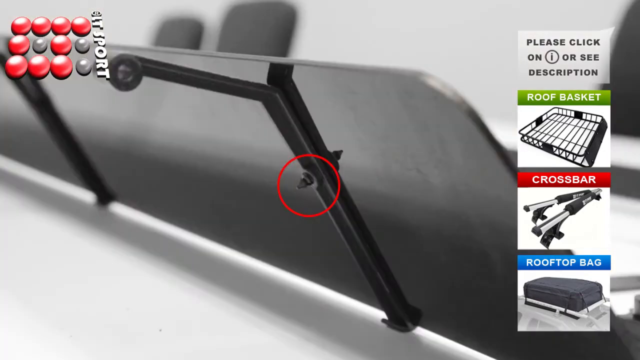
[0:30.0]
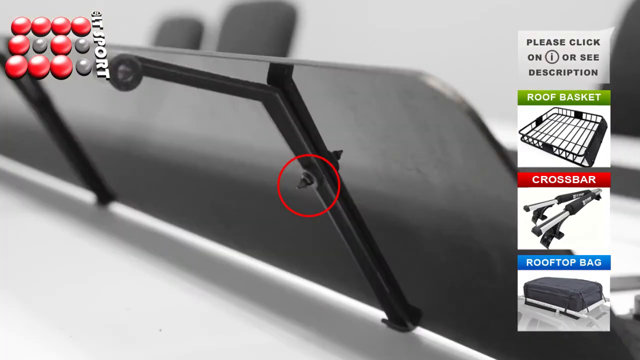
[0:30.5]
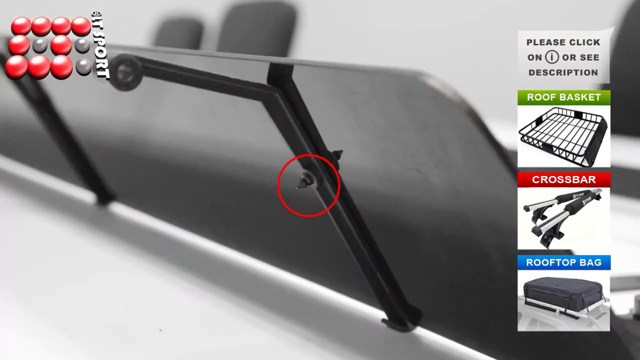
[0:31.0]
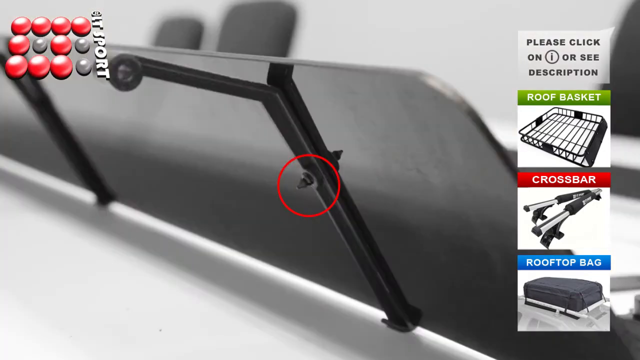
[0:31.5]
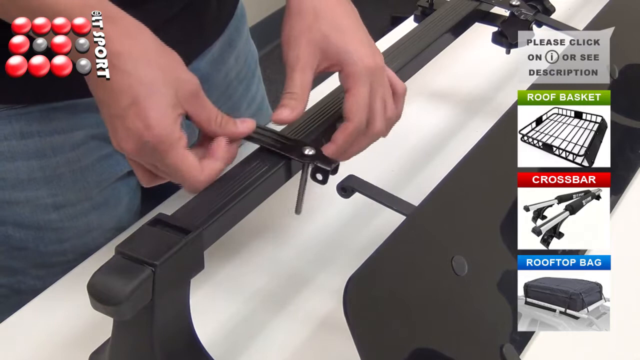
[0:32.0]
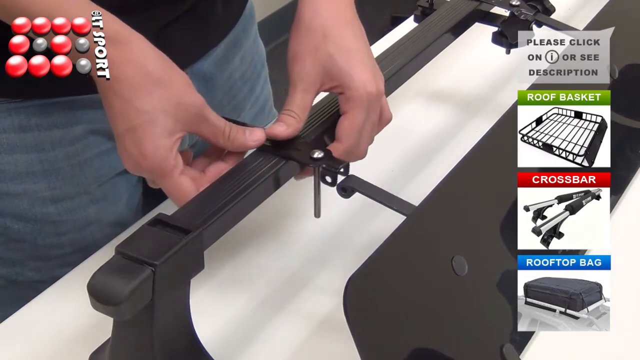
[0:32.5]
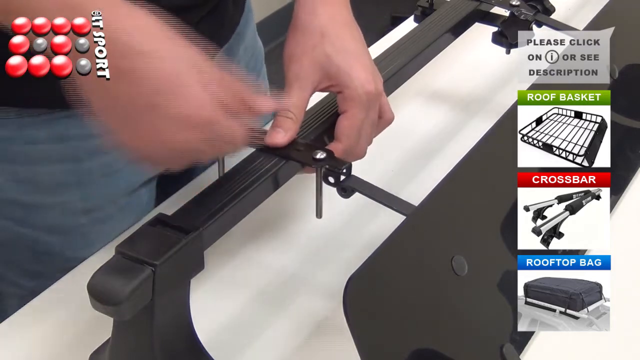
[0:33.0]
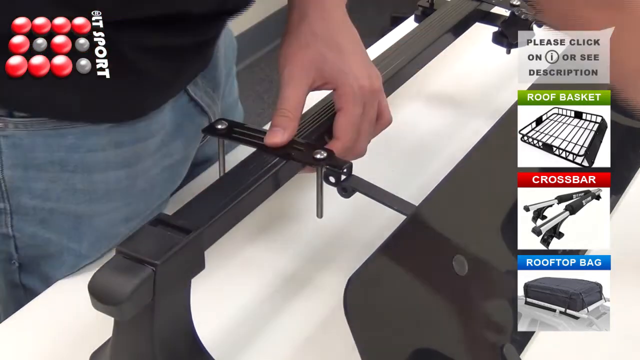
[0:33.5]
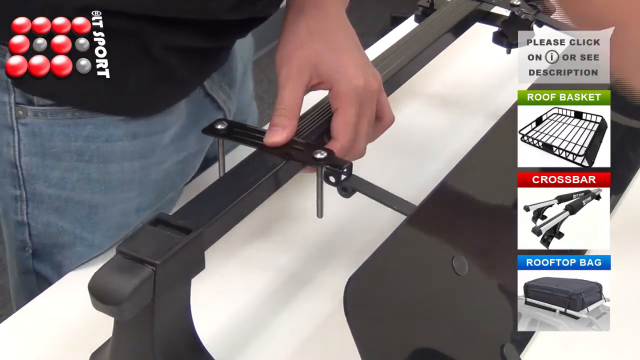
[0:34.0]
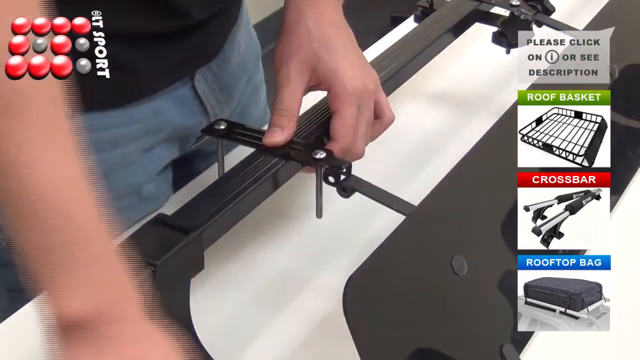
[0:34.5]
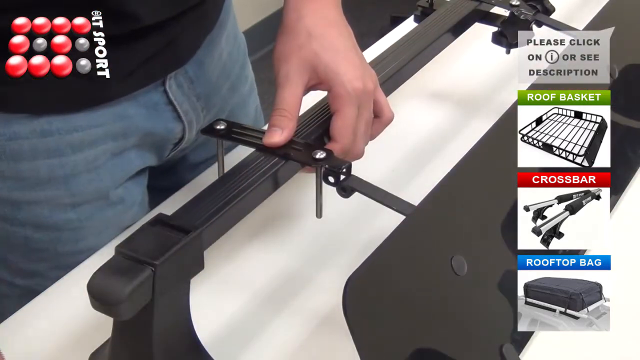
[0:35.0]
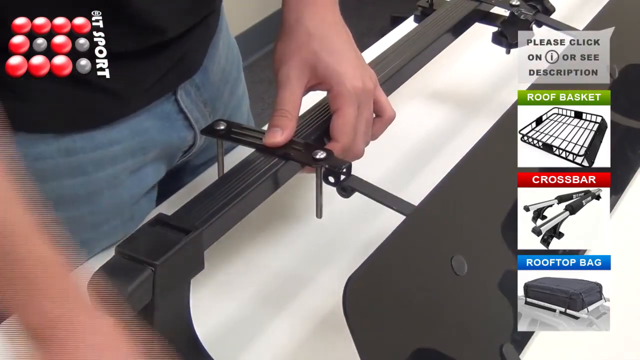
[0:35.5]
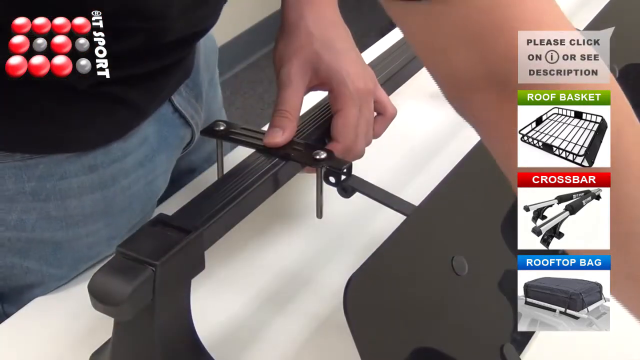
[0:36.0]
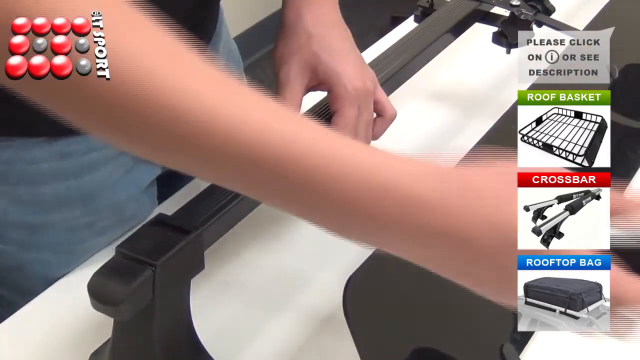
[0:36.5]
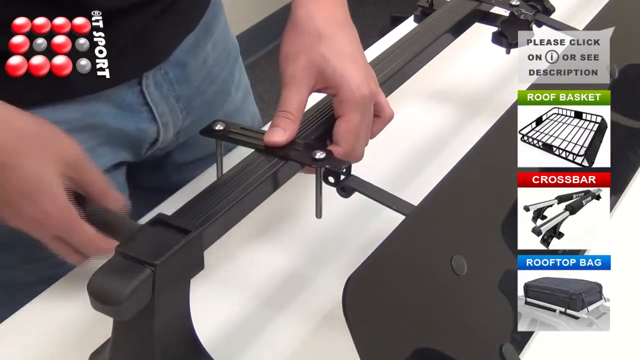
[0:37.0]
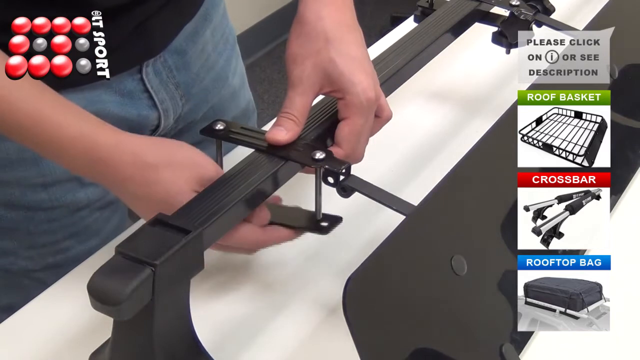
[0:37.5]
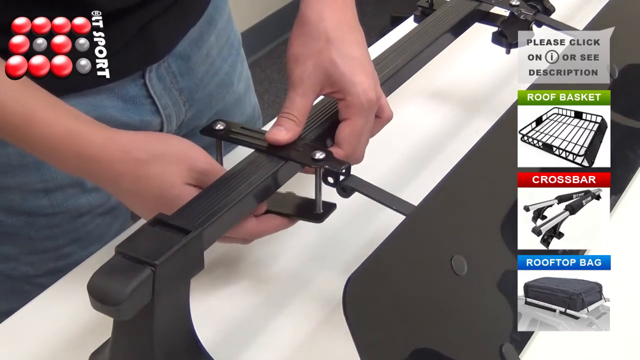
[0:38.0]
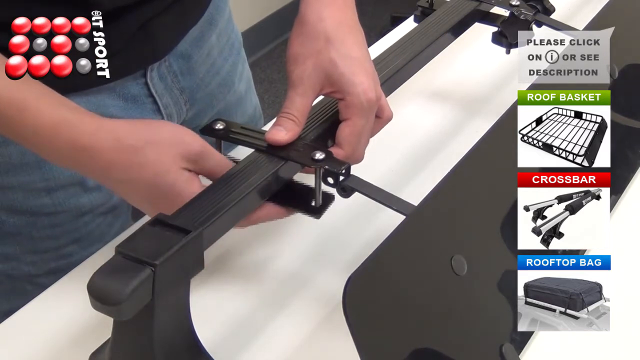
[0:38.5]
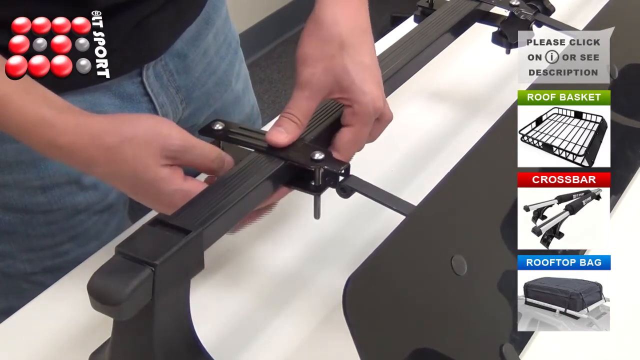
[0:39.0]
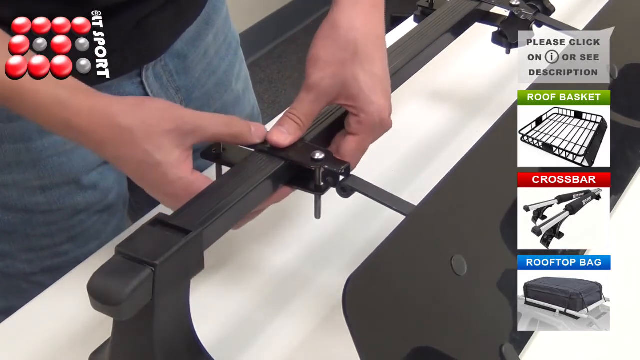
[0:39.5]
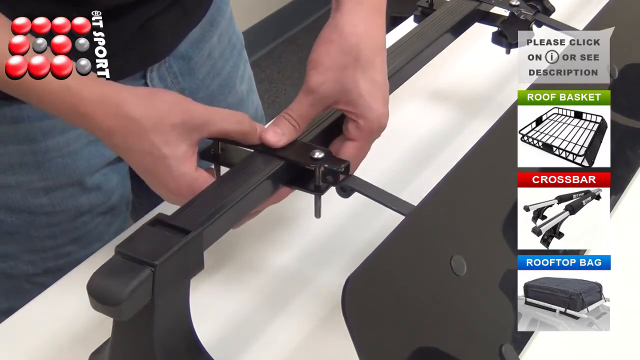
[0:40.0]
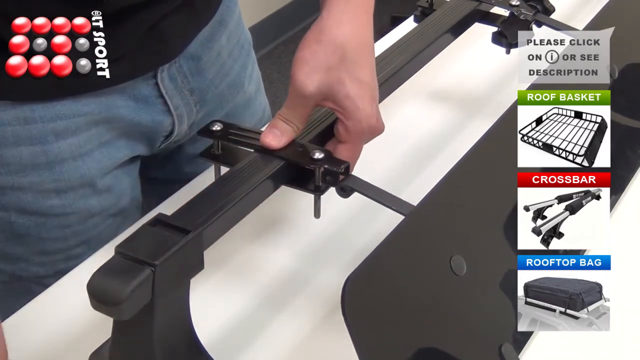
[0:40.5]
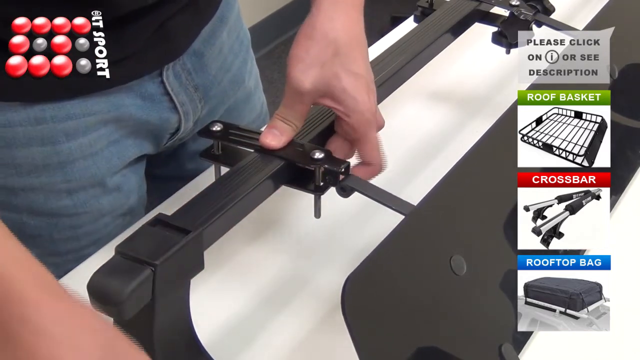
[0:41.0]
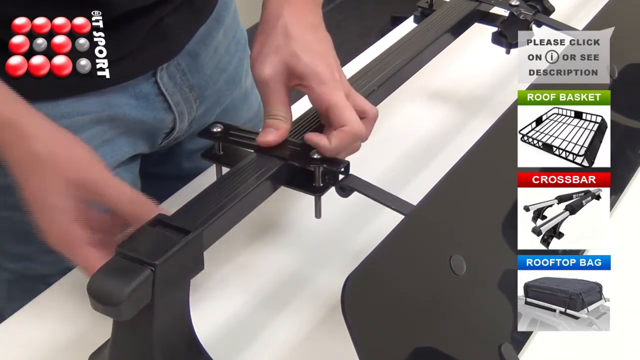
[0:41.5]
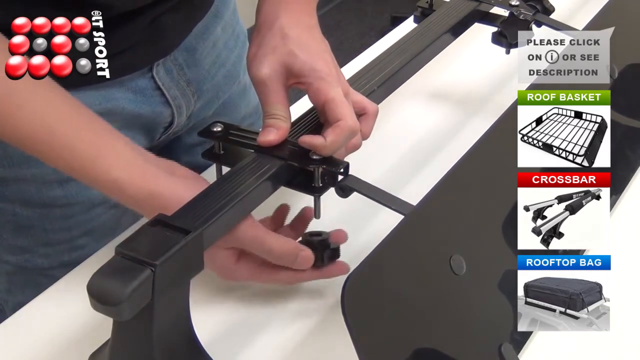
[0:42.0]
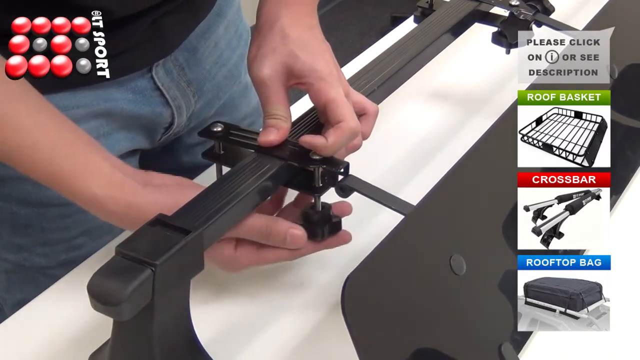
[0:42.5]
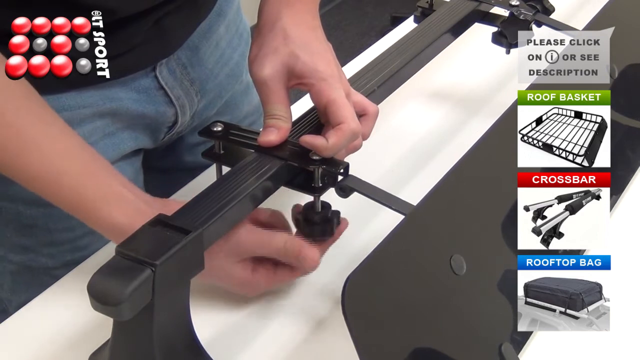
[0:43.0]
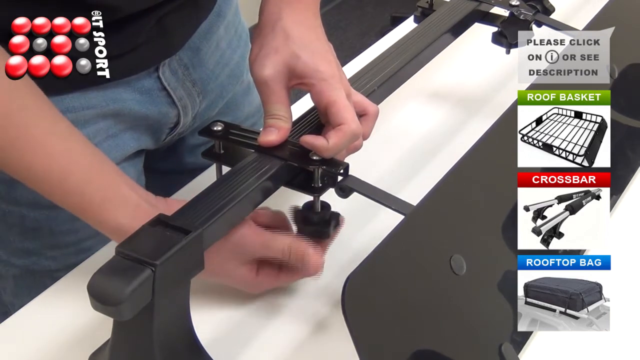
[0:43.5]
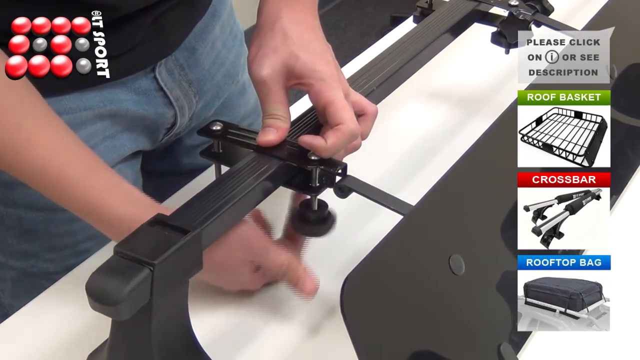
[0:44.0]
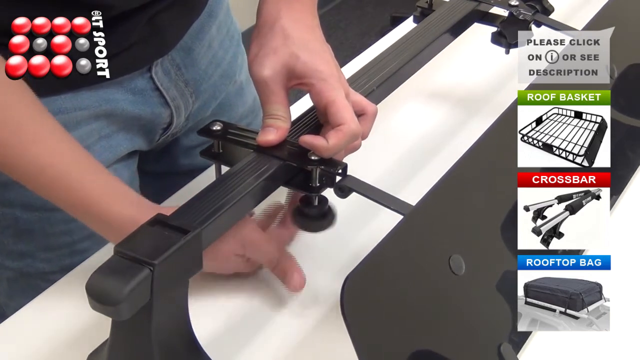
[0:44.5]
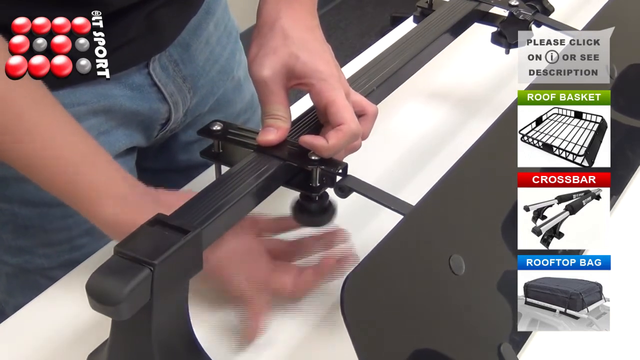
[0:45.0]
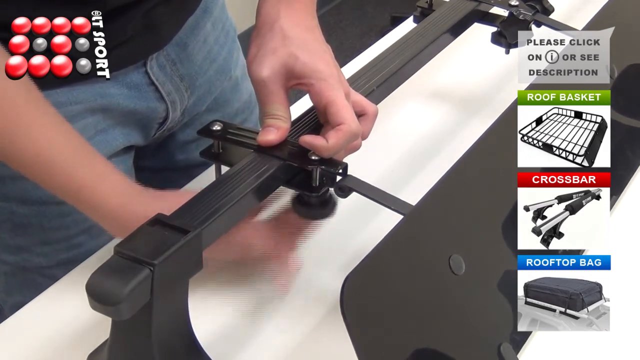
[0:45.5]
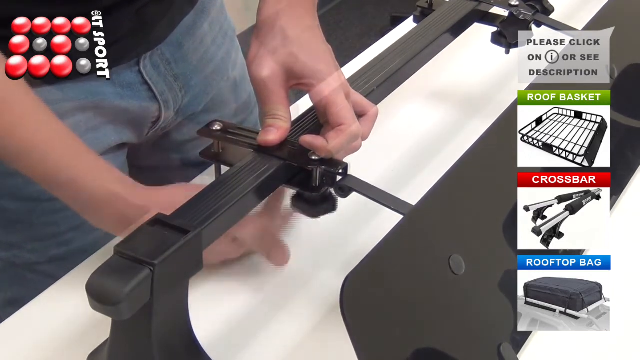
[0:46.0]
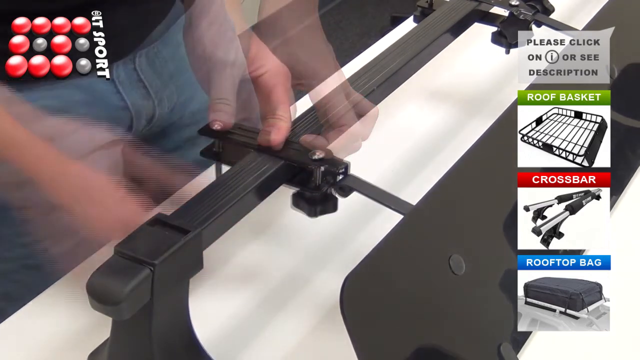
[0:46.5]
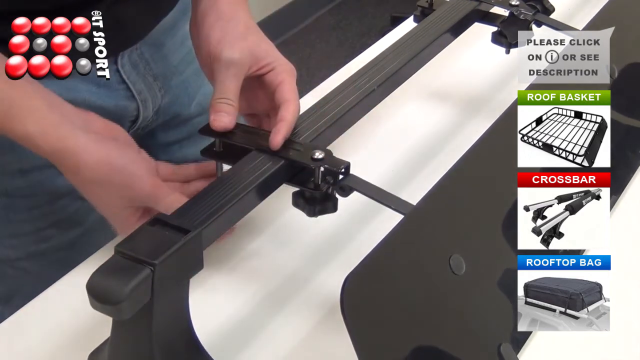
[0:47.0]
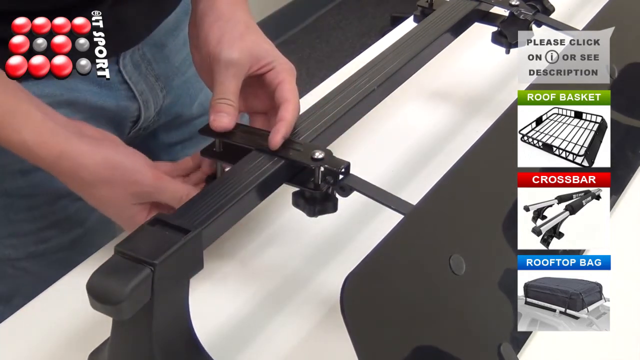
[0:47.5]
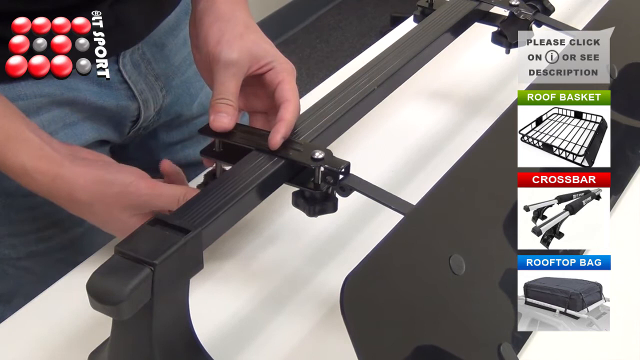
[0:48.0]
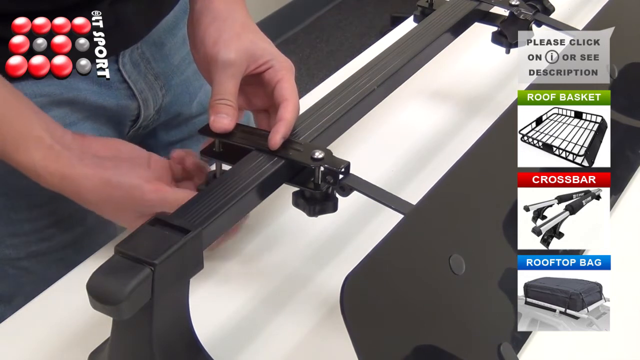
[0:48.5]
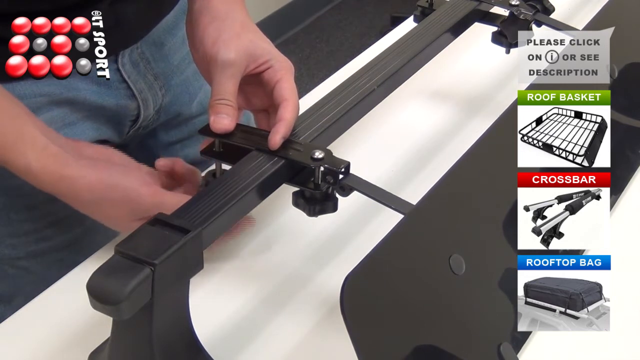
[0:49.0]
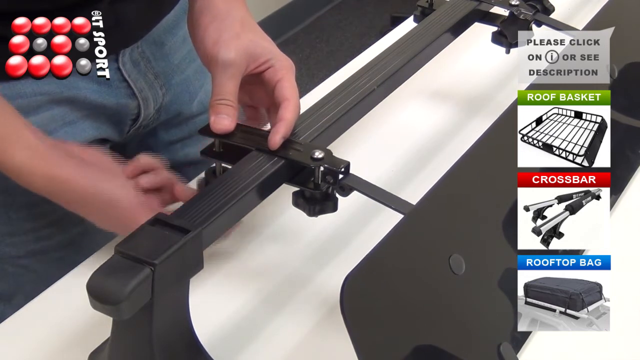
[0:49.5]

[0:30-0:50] "LT Sport" with the logo still appears on the side. A man shows how to put the contraption together, screwing on knobs. Text reads "please click on i or see description". A roof basket, a crossbar and a rooftop bag are shown, apparently all available as well. He assembles the bar at a steady pace, and the video seems to have been edited, with a portion apparently missing while he screws on the knobs underneath the bar. He wears a black shirt and blue jeans, and his hands and arms look young.